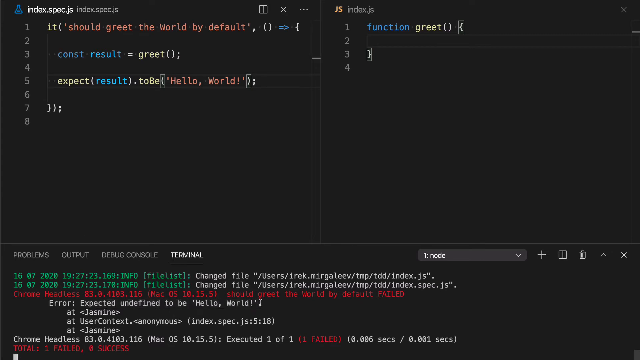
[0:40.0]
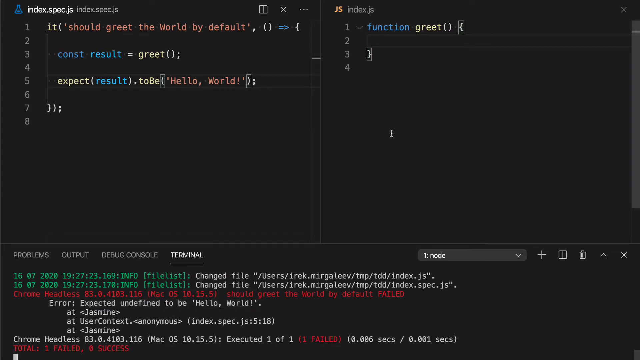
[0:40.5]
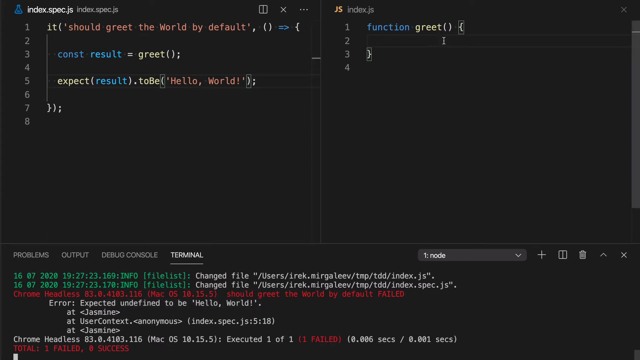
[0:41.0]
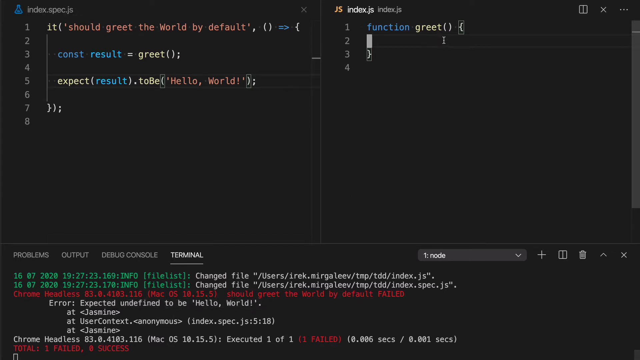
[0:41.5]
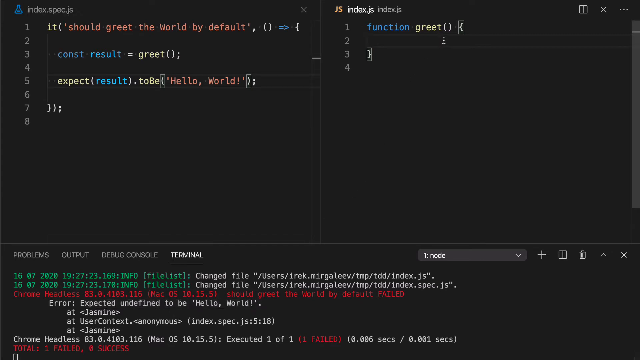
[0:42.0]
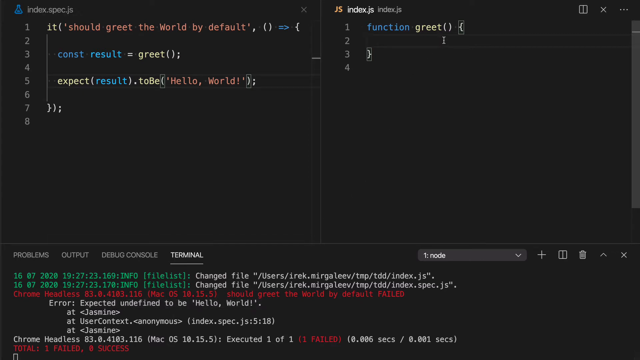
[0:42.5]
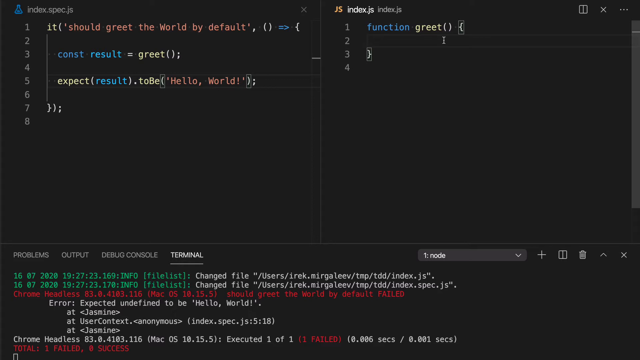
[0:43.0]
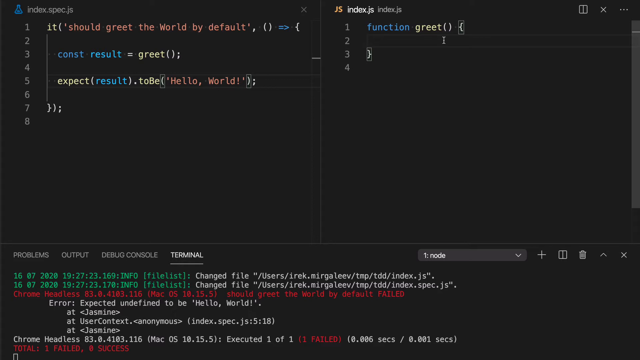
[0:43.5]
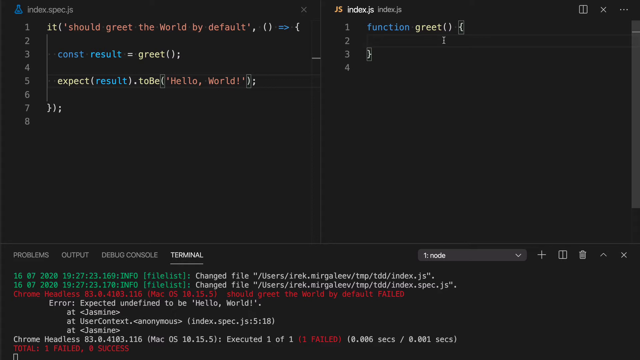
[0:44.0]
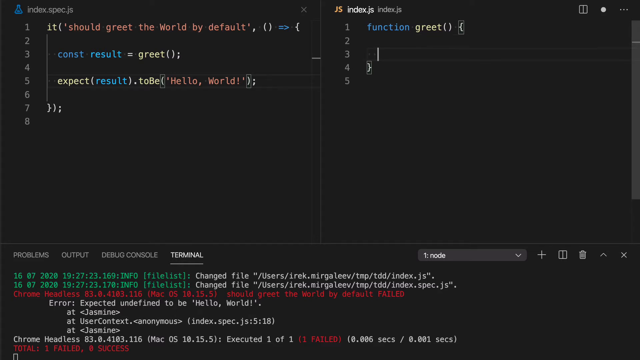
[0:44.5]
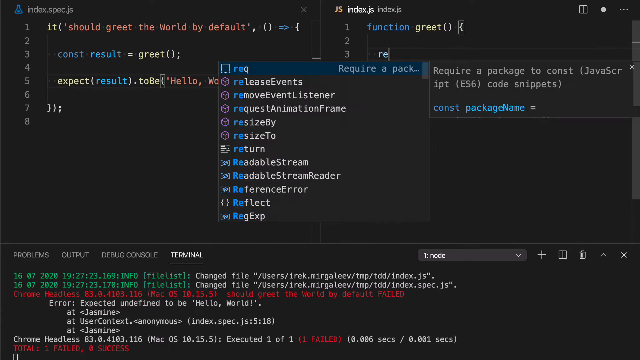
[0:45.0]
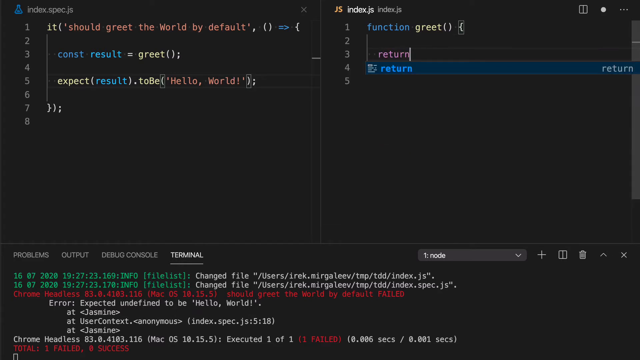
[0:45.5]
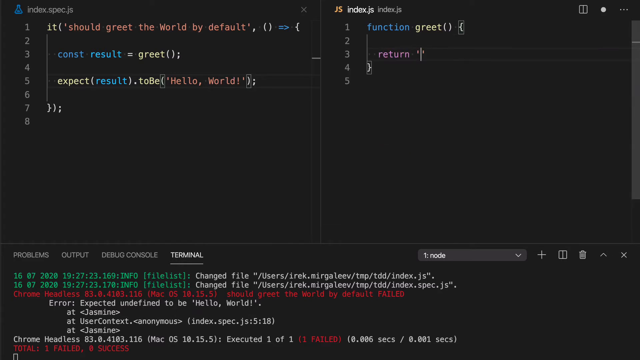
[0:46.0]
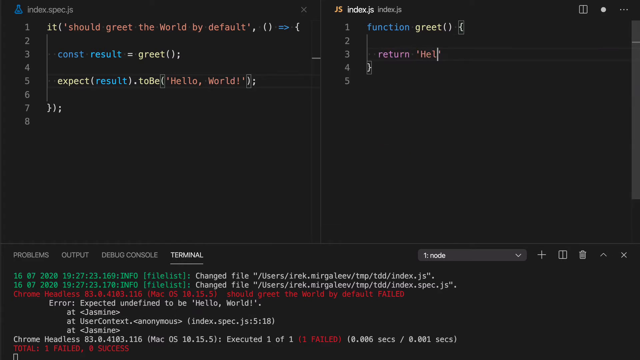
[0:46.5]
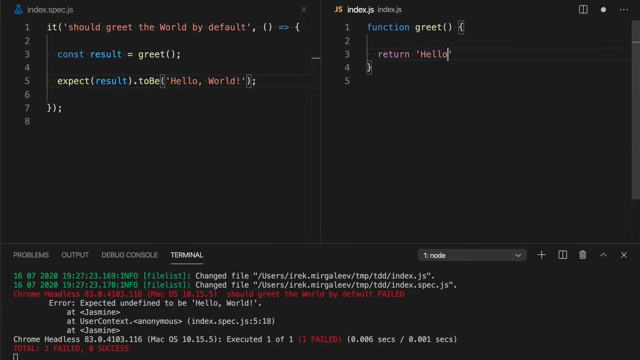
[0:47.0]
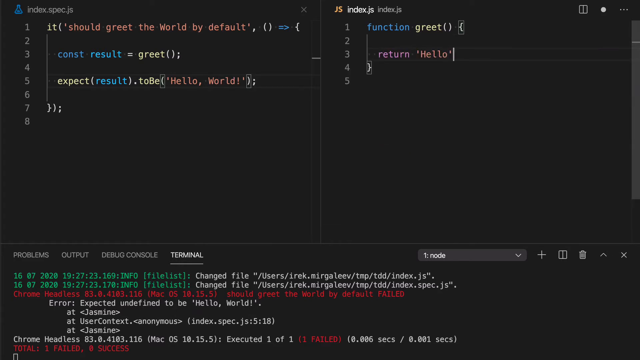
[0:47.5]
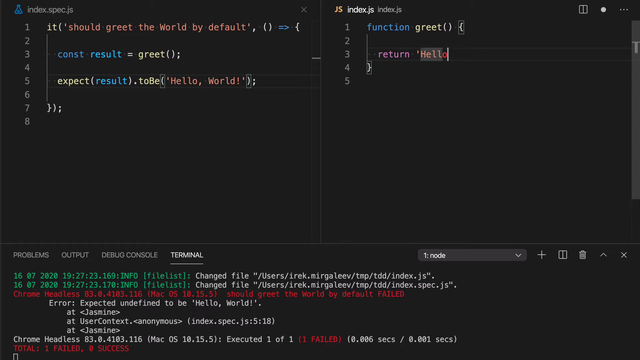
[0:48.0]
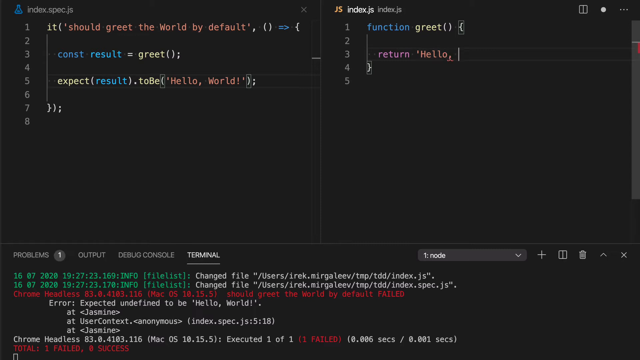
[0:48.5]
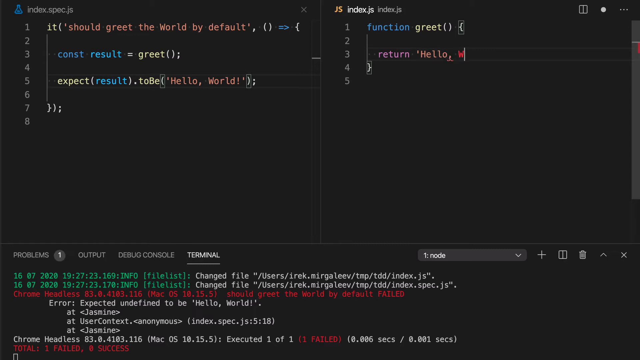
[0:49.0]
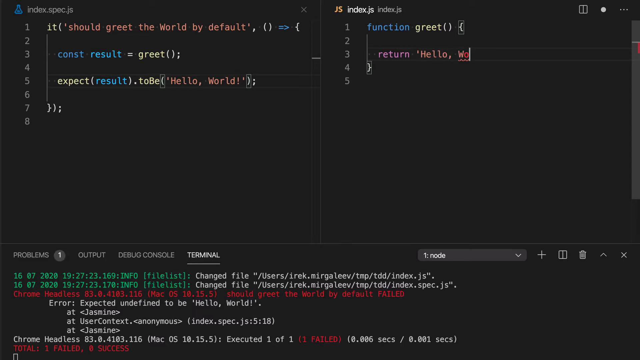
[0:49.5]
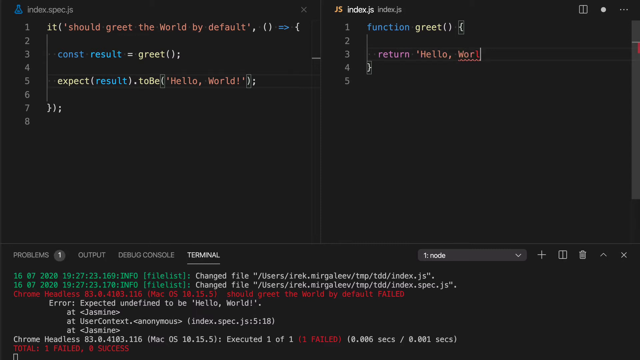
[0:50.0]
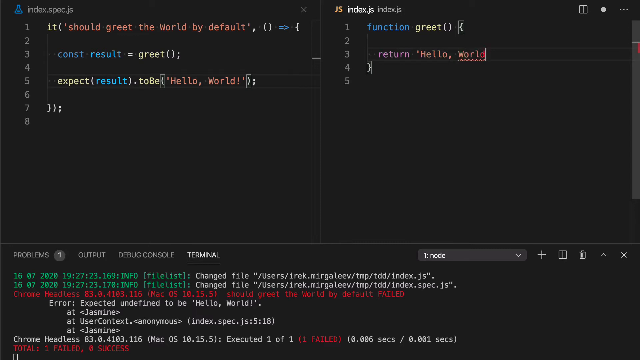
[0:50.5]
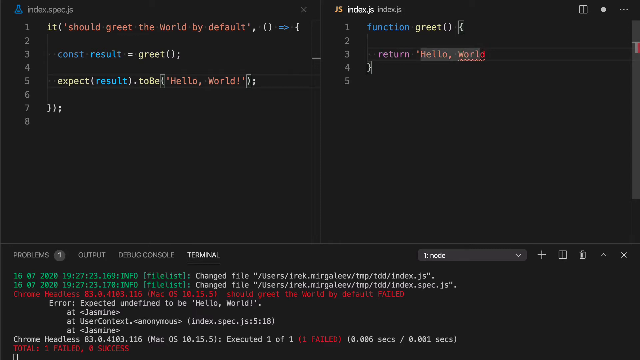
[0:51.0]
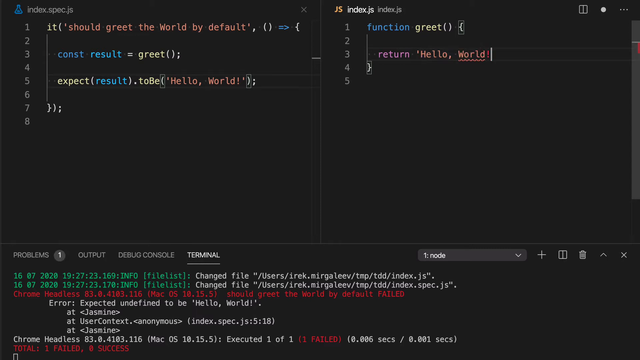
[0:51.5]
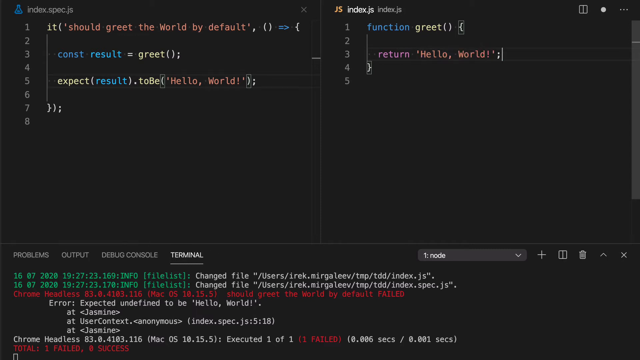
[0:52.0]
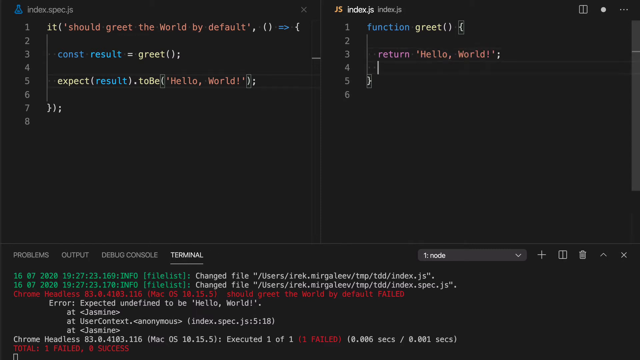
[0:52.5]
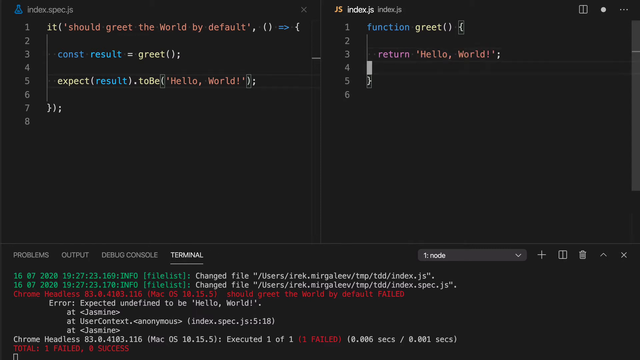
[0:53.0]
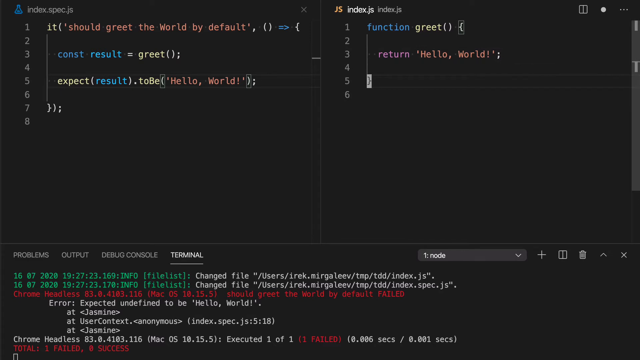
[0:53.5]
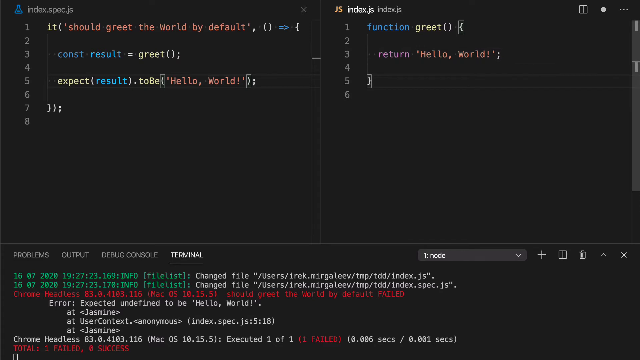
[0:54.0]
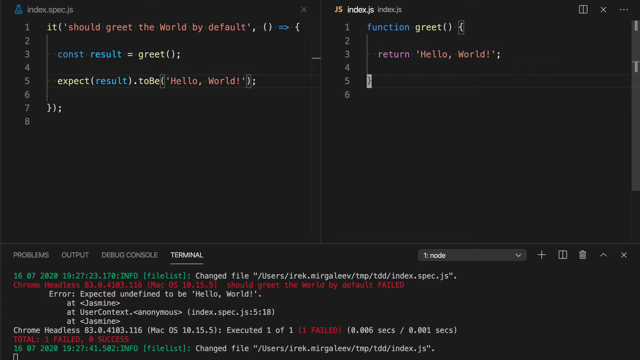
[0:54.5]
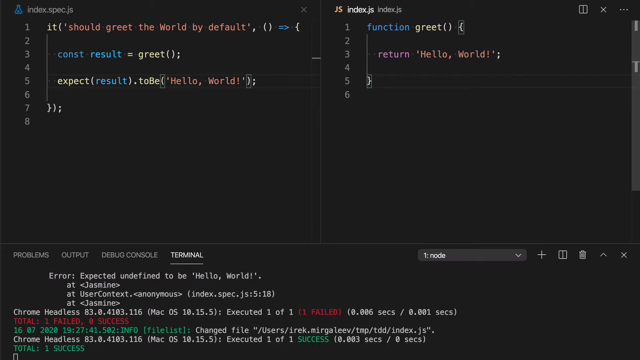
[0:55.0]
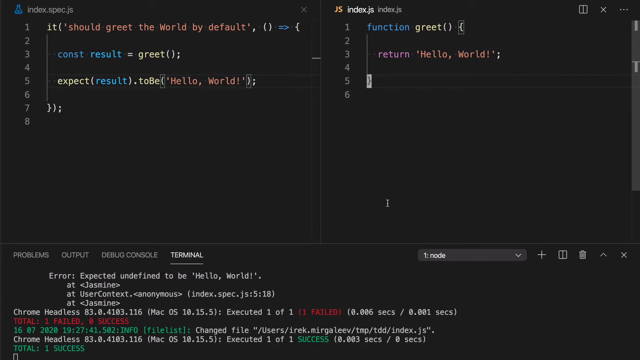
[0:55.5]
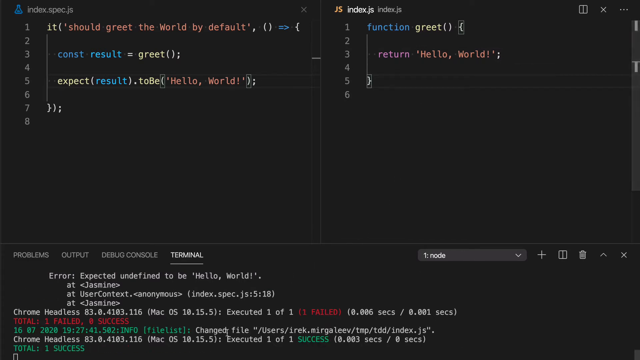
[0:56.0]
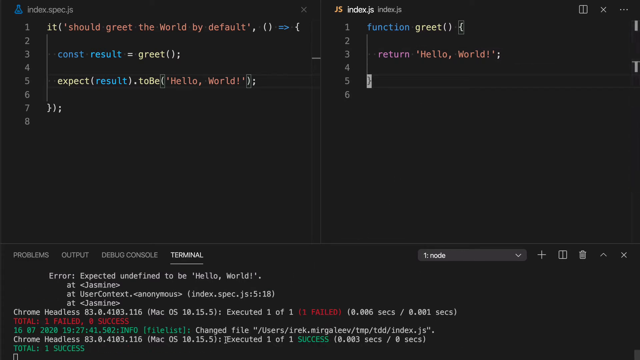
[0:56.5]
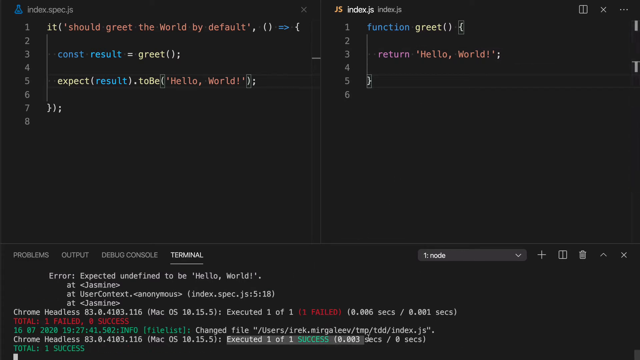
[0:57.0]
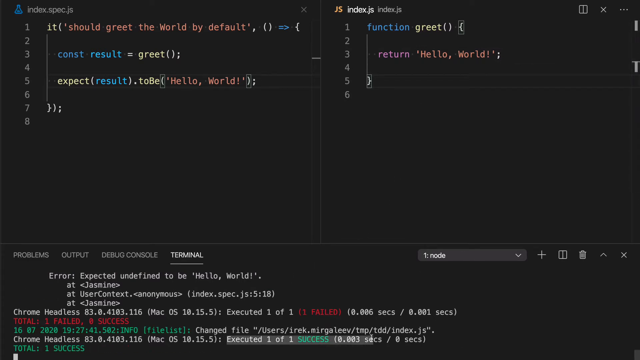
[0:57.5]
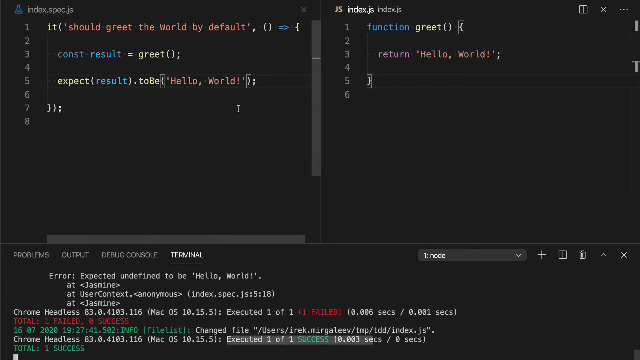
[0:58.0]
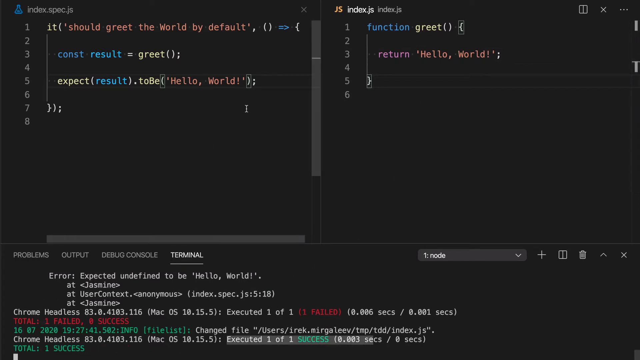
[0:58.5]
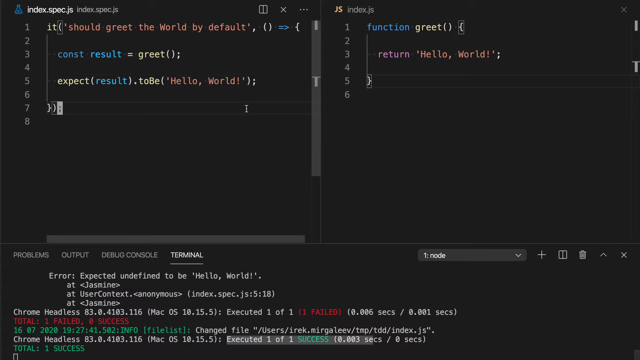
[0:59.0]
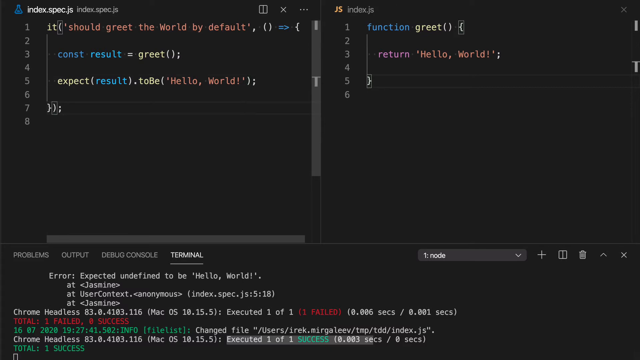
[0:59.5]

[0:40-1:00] The code shows "should greet the world by default", "construct result", "greet", "expect", "result" and "hello world", in green, yellow, blue, white and red. Someone continues typing, and the cursor moves as they type. "return" appears in purple and "hello" in a kind of orangey color. The word "mode" is visible, along with a small trash can symbol, and the words "functions" and "JS".